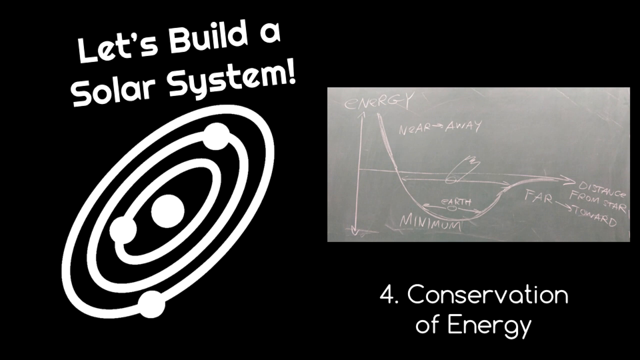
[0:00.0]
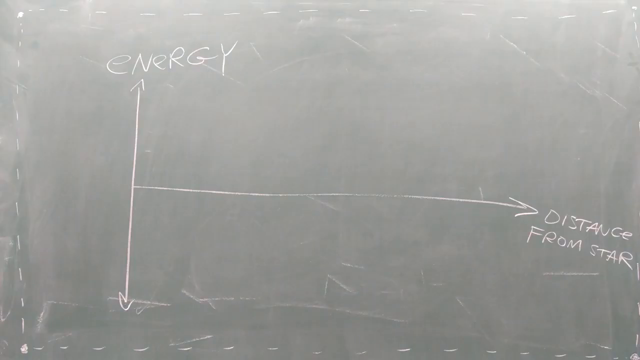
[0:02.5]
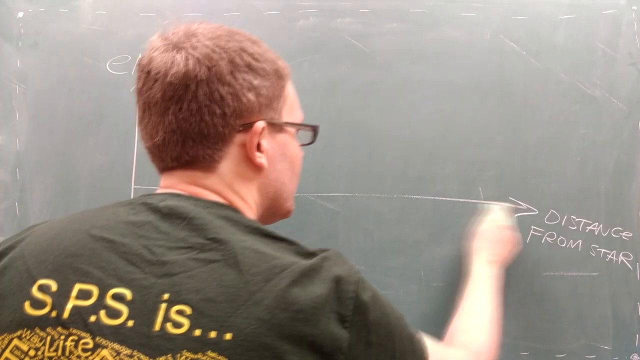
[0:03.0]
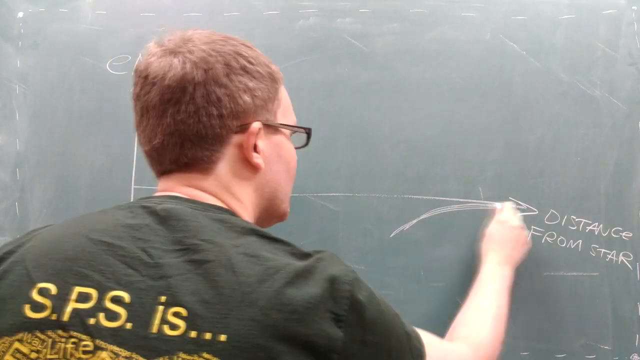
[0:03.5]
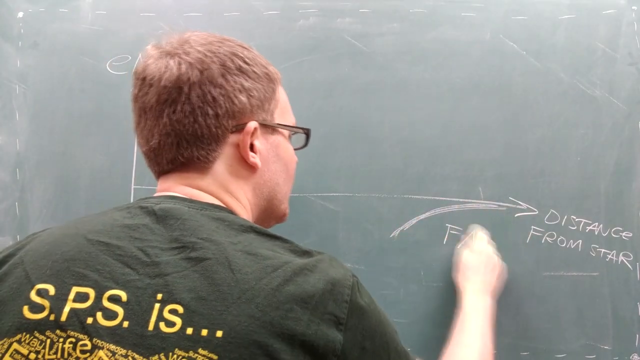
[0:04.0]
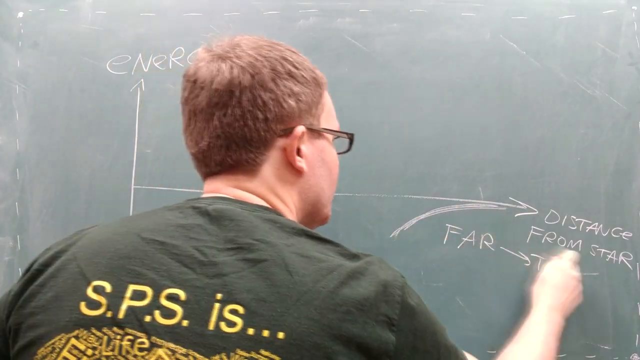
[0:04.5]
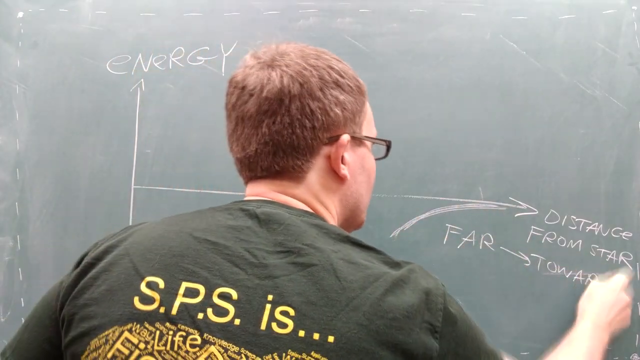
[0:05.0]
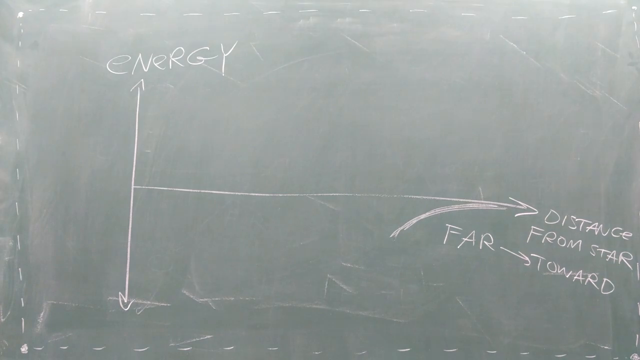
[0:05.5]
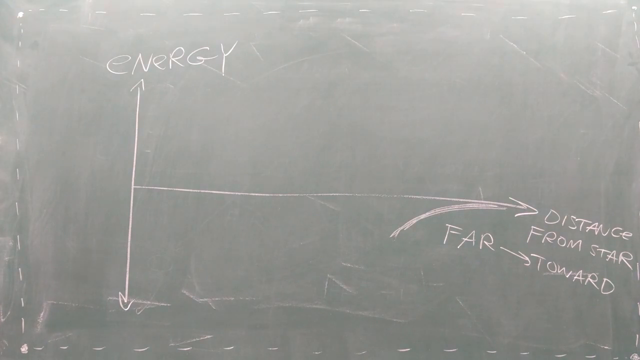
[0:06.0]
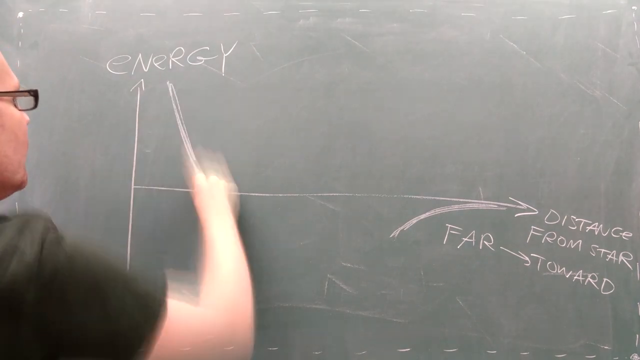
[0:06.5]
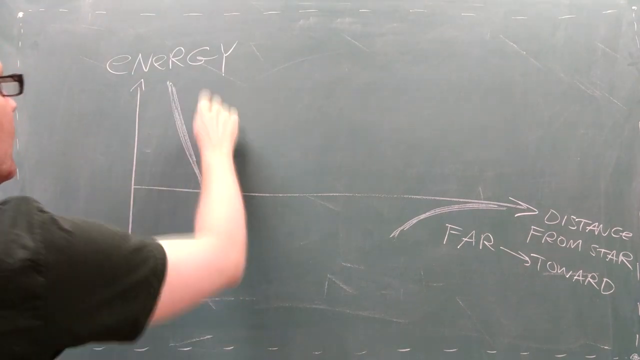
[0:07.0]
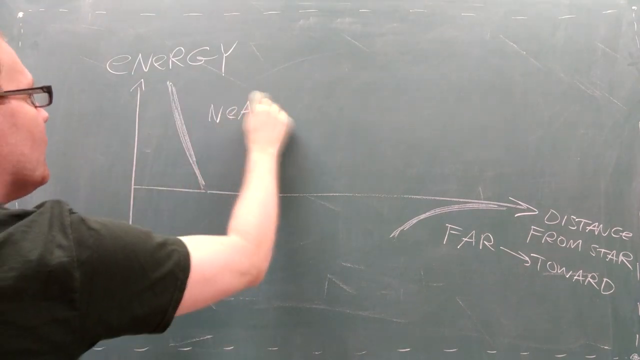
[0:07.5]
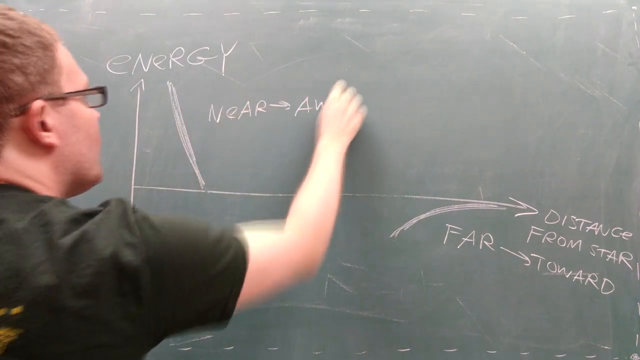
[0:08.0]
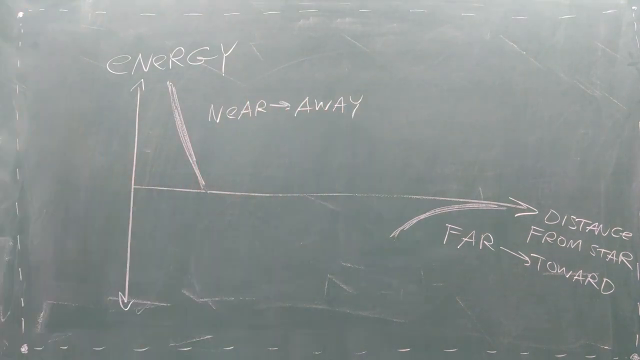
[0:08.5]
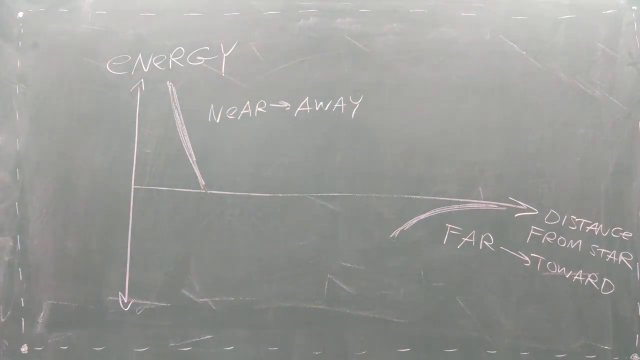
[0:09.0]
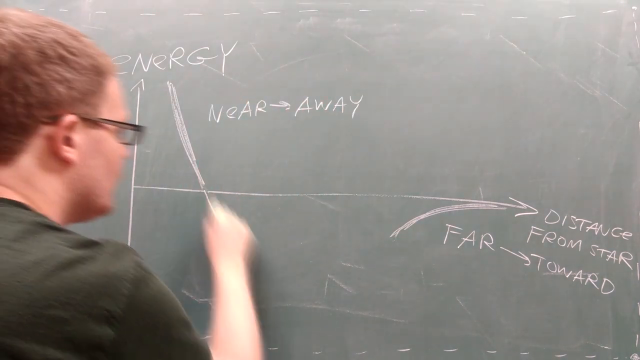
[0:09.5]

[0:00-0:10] What seems to be a graph about a solar system appears on a black page, with the text "conservation of energy" and three dots in the middle. Labels refer to energy near or away, distance far and away from the star, and the minimum distance from the star. A man continues to write on each of the graphs, which cover energy near and away, distance far and away from the star, and minimum distance from any chosen angle in both directions. The view then returns to the first screen.